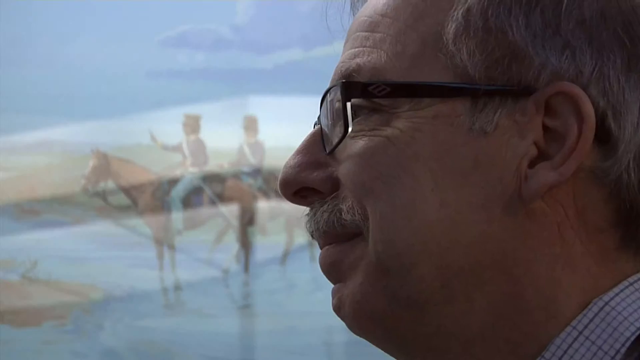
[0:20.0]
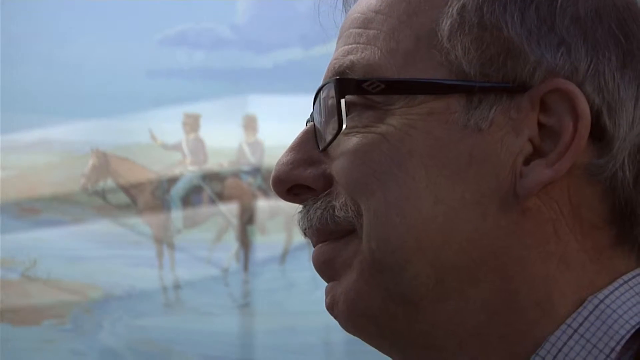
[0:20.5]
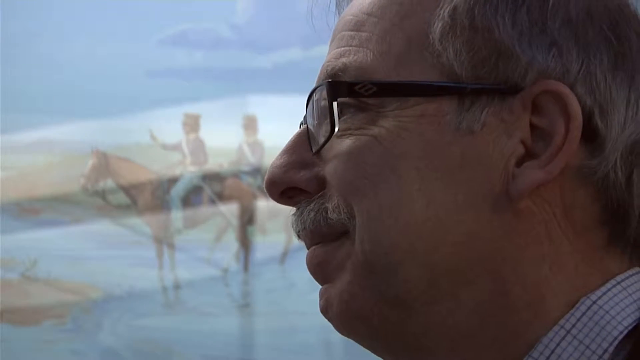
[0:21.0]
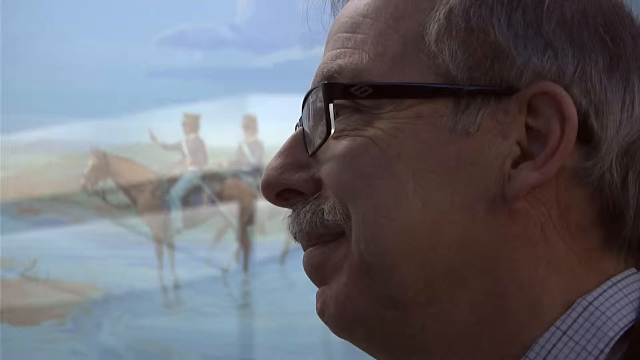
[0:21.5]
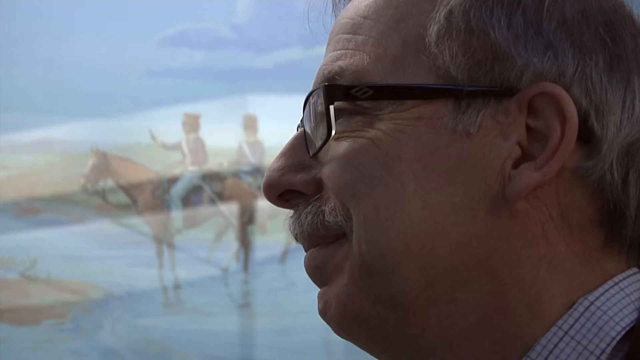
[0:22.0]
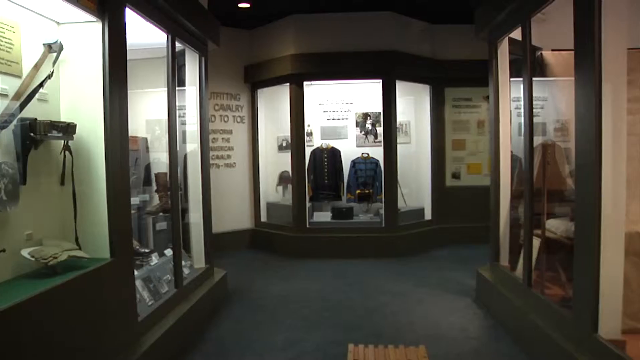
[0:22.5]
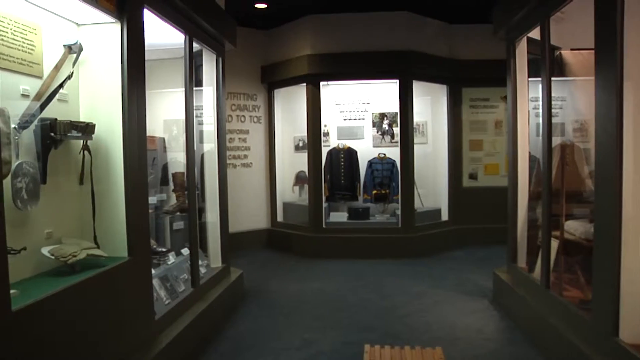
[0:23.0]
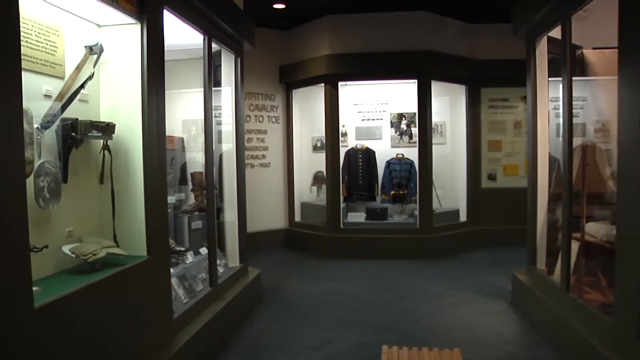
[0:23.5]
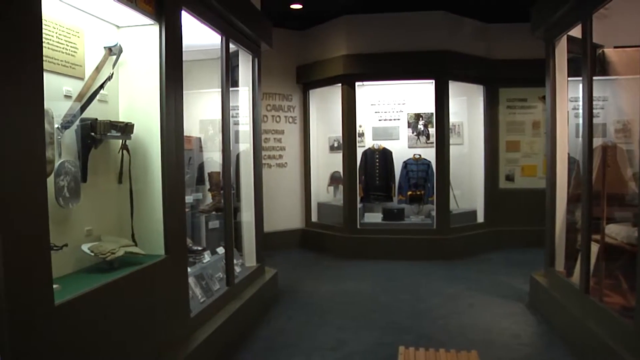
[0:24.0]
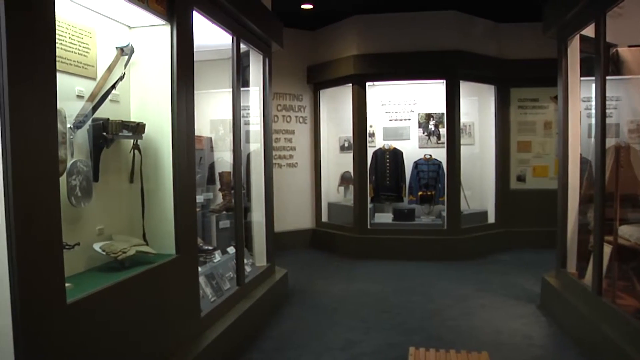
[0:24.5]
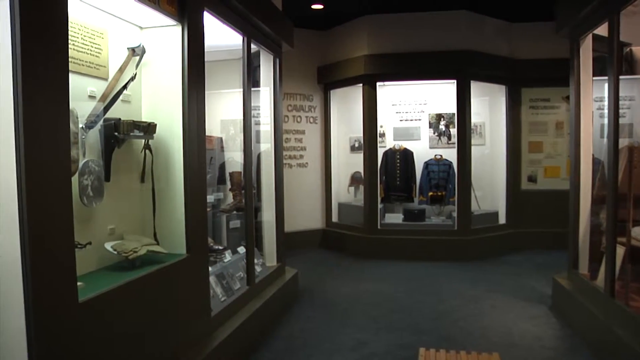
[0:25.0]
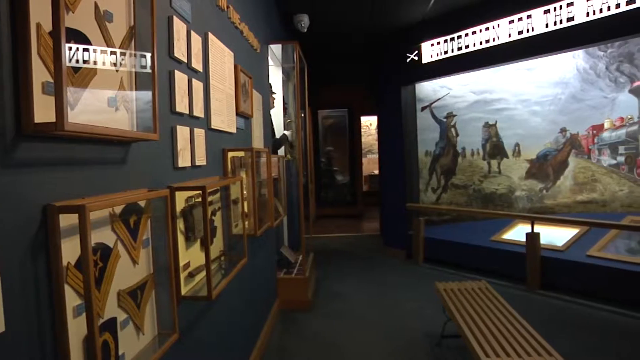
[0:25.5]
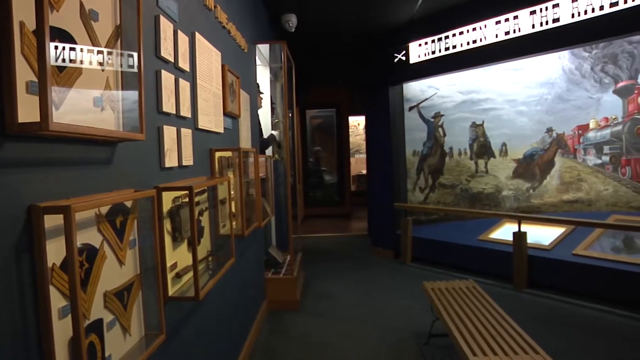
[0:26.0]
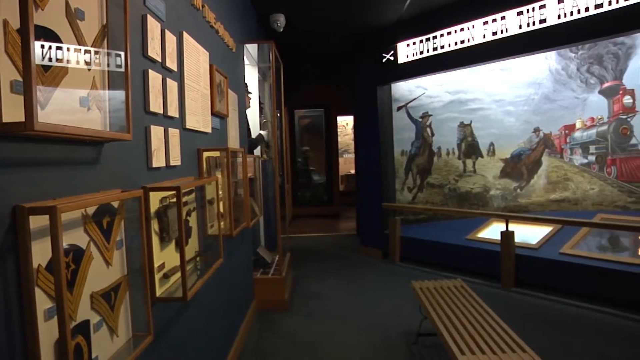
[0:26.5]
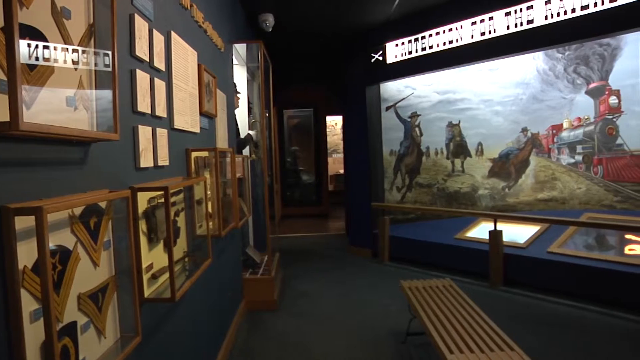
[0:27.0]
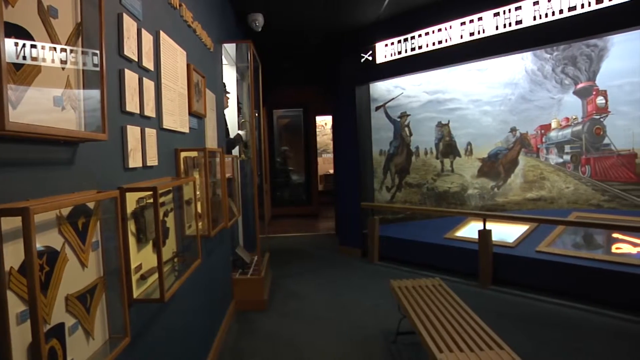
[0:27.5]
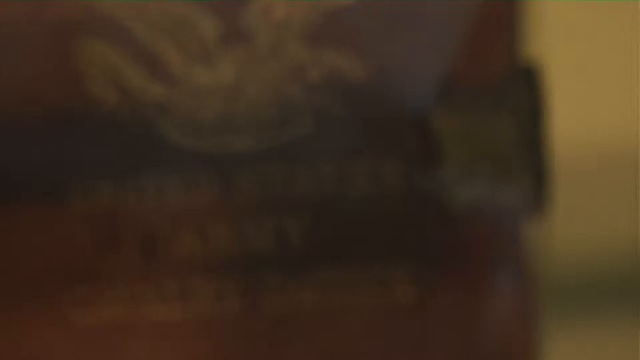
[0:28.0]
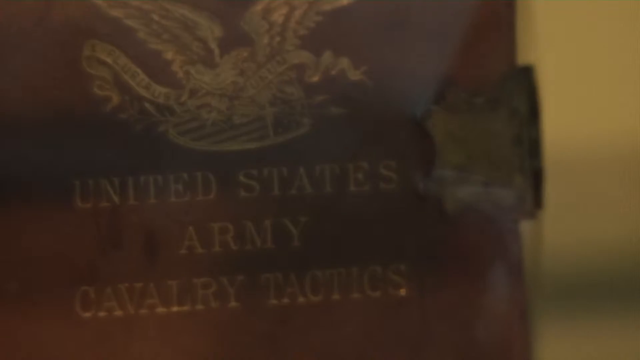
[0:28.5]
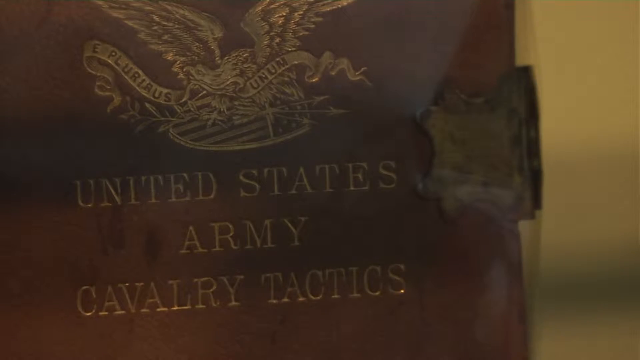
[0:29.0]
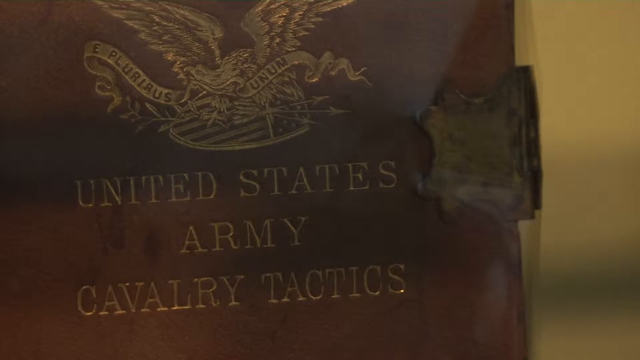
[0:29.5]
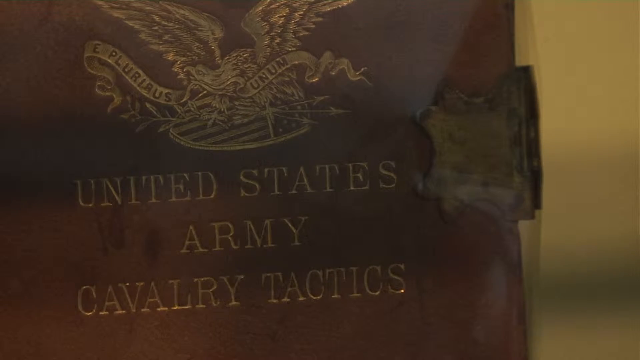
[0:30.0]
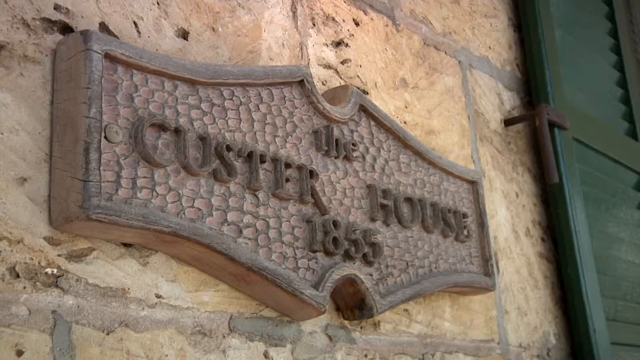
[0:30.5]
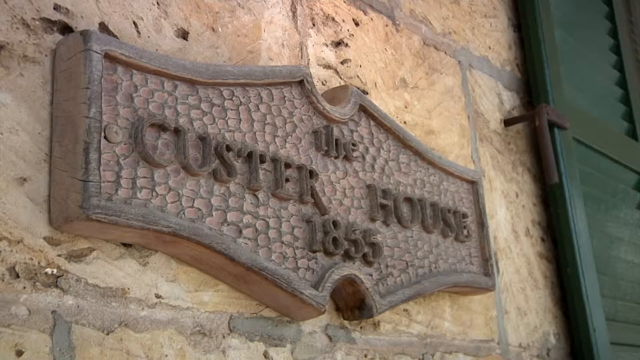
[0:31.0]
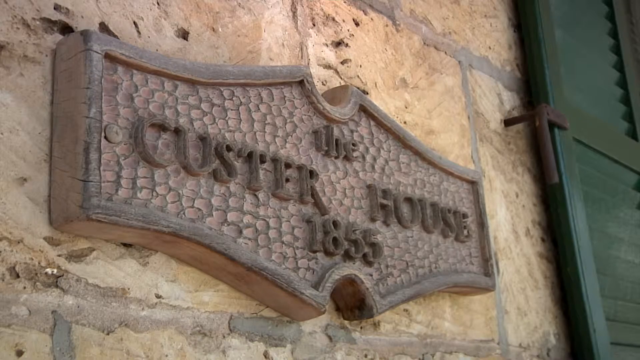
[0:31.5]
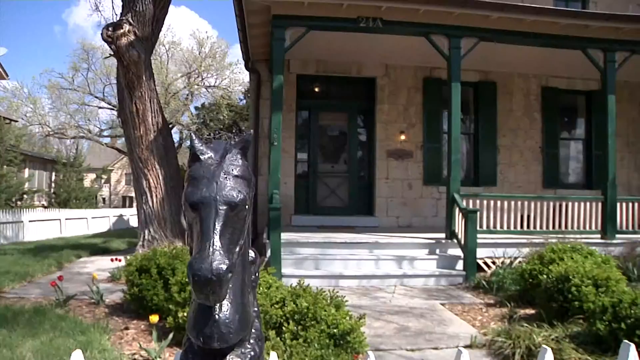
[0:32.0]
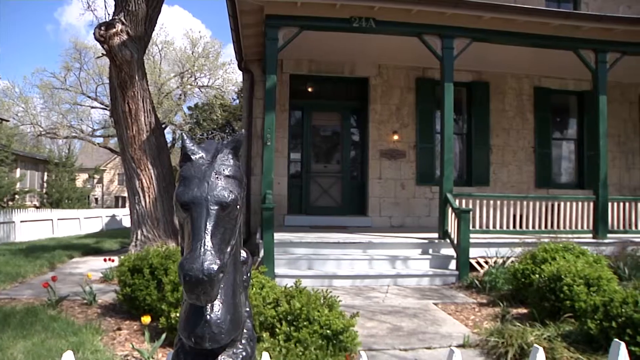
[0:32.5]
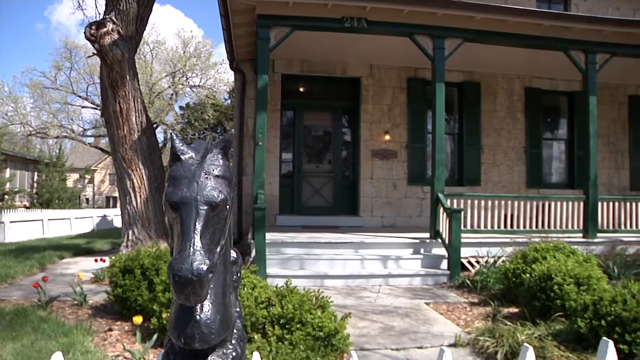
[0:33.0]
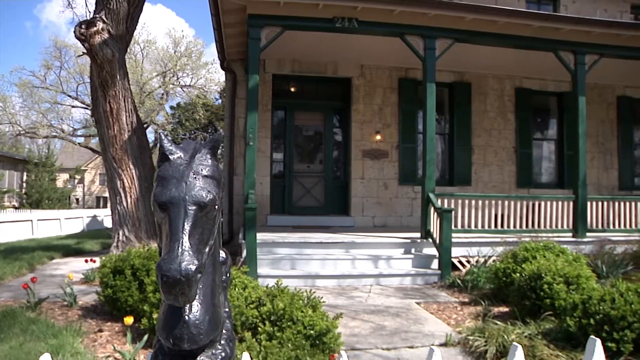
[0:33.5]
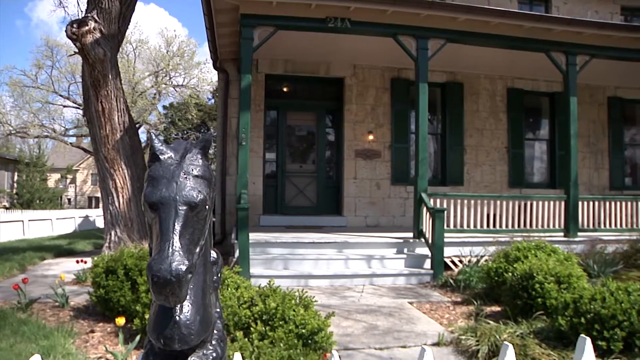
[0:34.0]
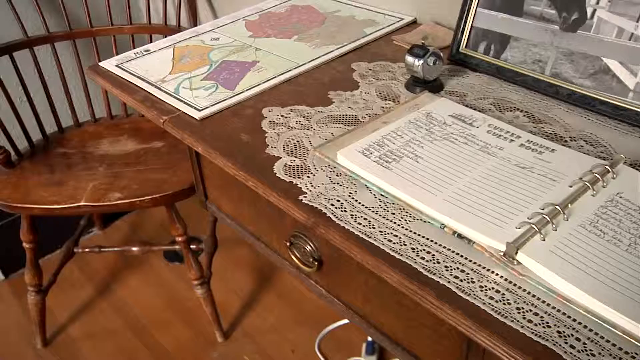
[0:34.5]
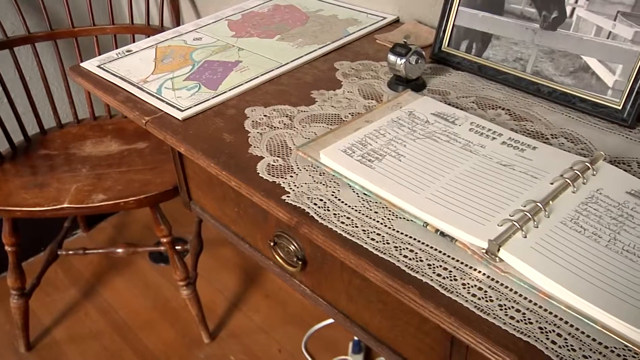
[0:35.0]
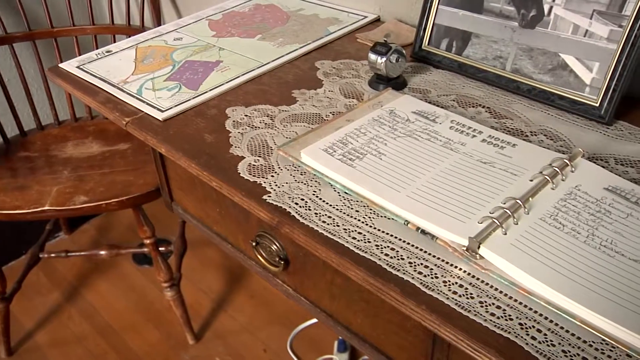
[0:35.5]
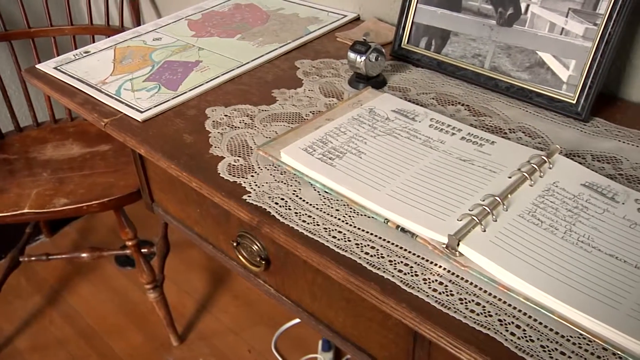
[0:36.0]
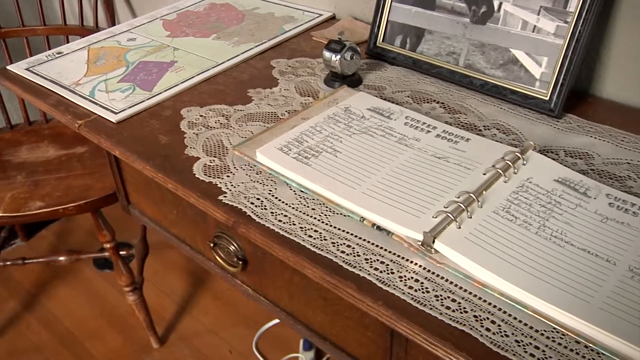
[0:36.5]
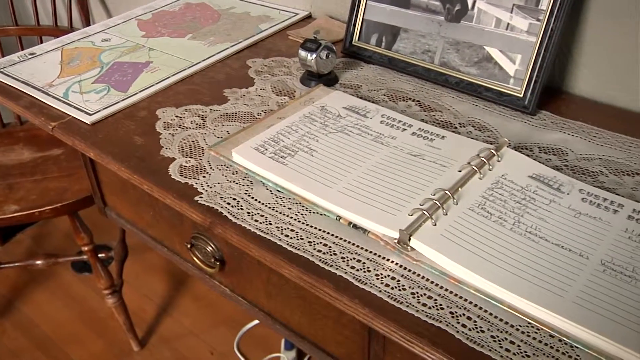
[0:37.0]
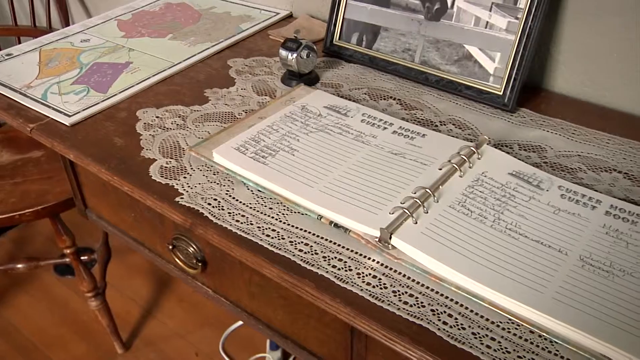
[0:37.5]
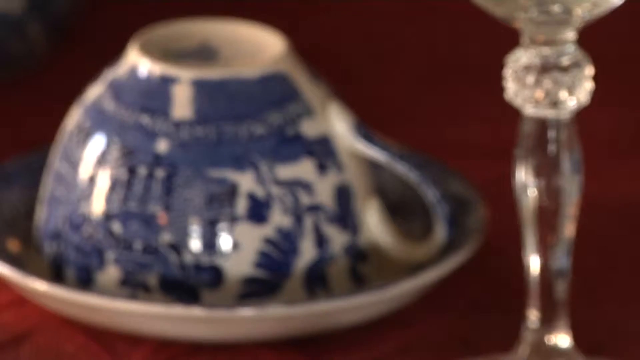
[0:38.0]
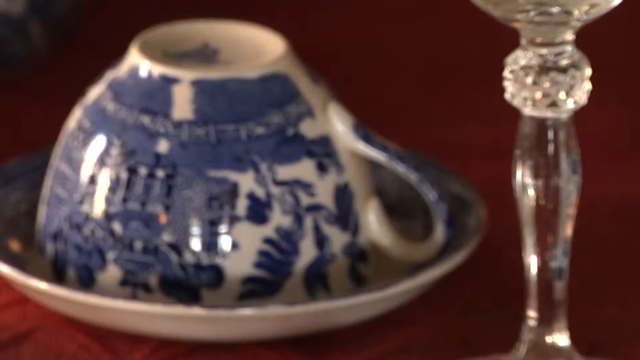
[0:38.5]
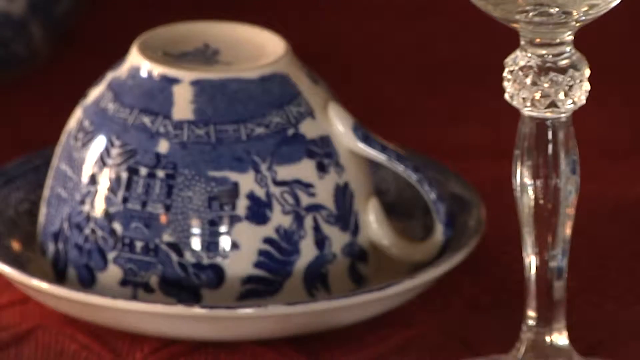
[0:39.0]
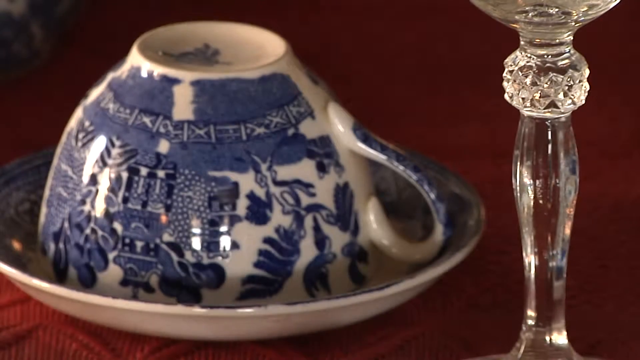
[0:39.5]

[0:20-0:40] A historian-type man talks, shown from the side in profile. An inside view of the museum follows; on the wall in the background it reads "outfitting the cavalry head-to-toe" and "uniforms of the American cavalry," along with some hard-to-read dates, possibly 1776 to 1880. Along the side walls are glass cases showing hats, belts, holster-type things and some placards, and in the distance there are wool coats with buttons. The camera pans over United States Army cavalry tactics and the Custer house. A guest book at the Custer house is shown, followed by some blue and white Delft china.